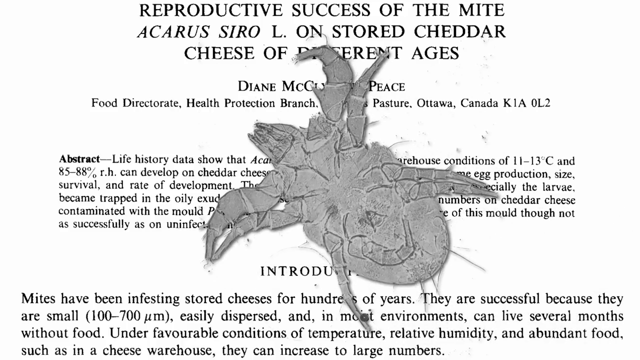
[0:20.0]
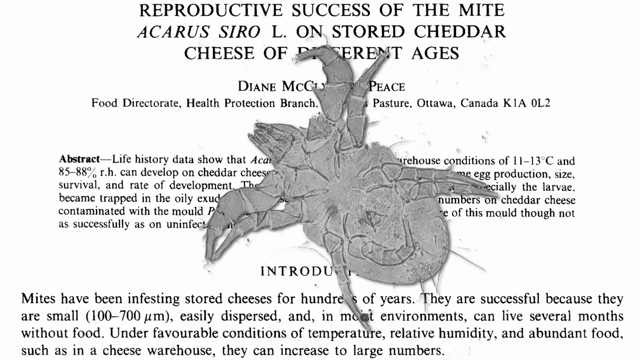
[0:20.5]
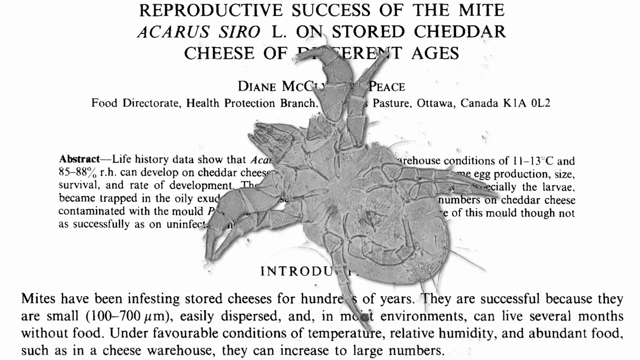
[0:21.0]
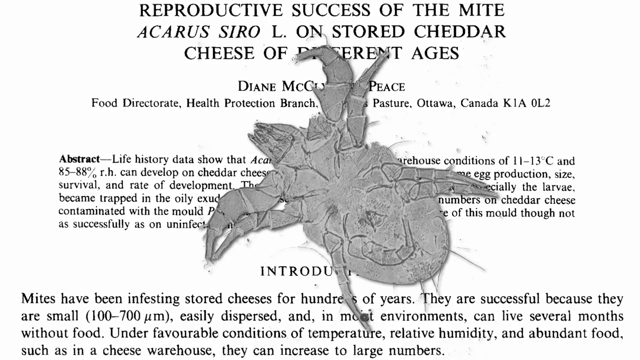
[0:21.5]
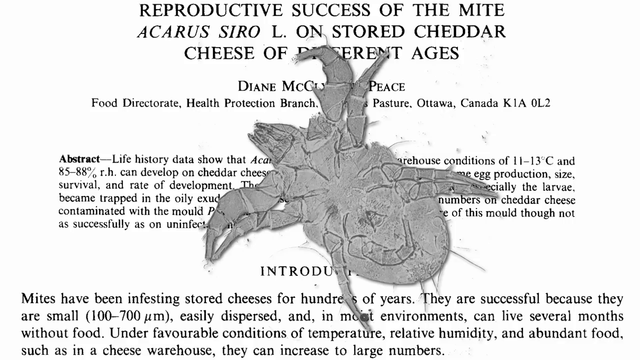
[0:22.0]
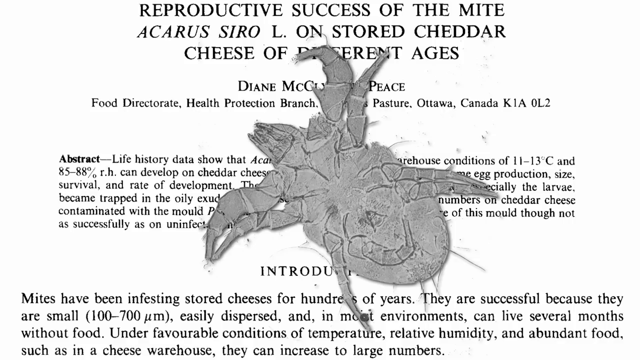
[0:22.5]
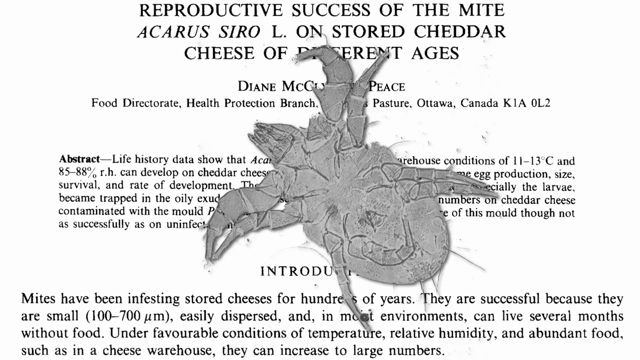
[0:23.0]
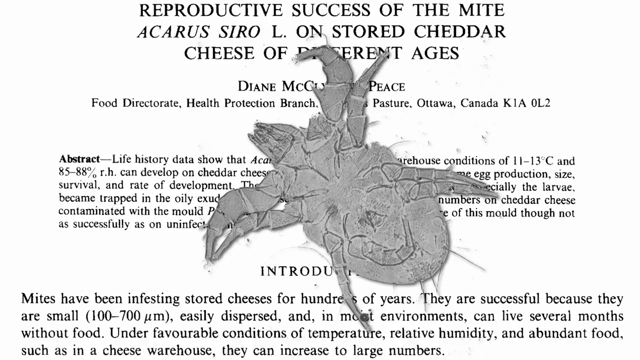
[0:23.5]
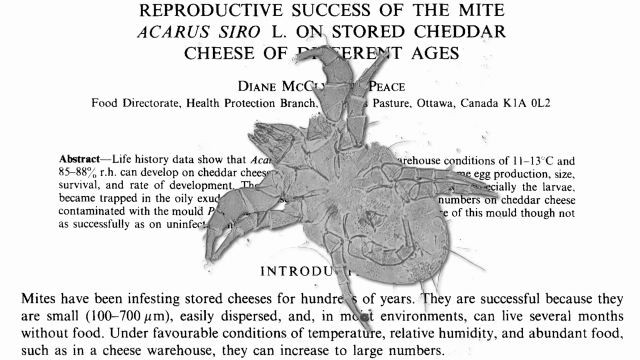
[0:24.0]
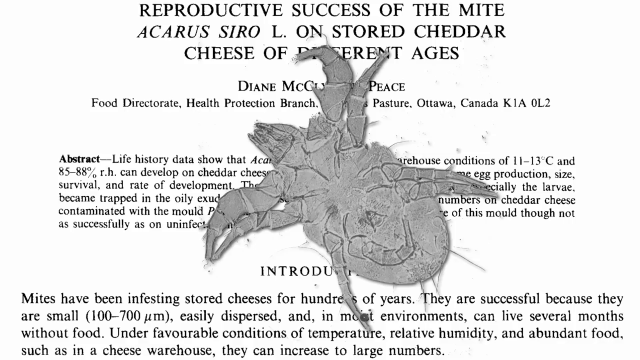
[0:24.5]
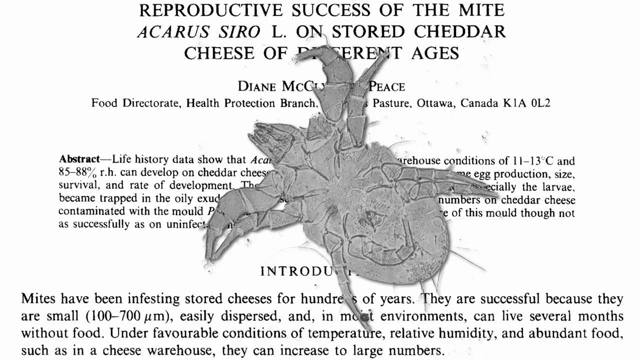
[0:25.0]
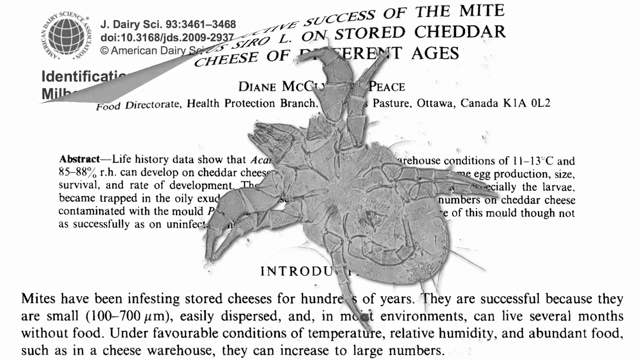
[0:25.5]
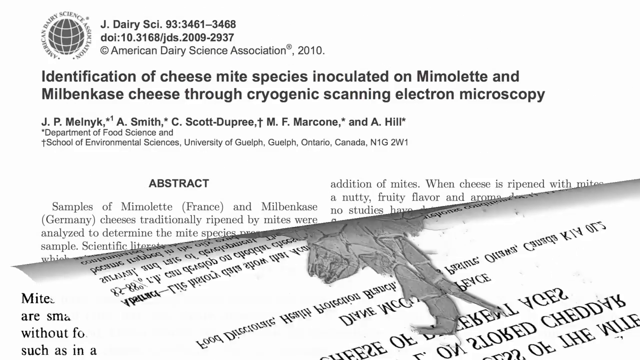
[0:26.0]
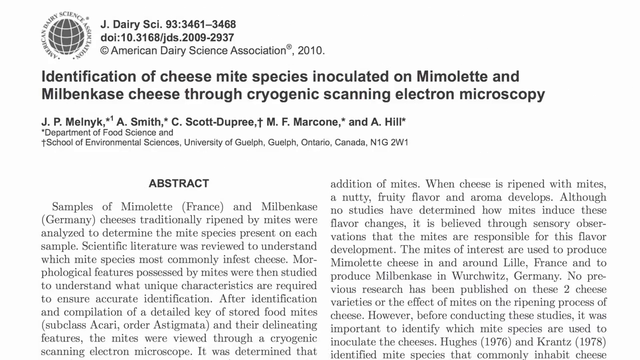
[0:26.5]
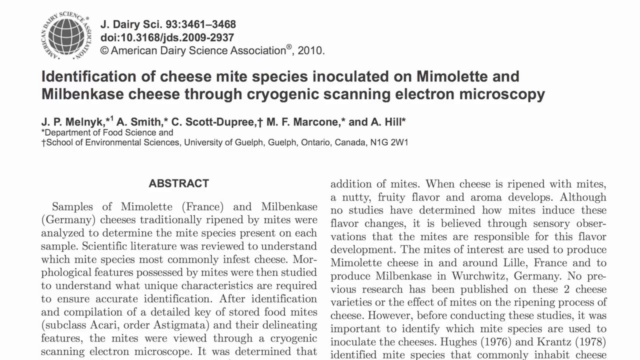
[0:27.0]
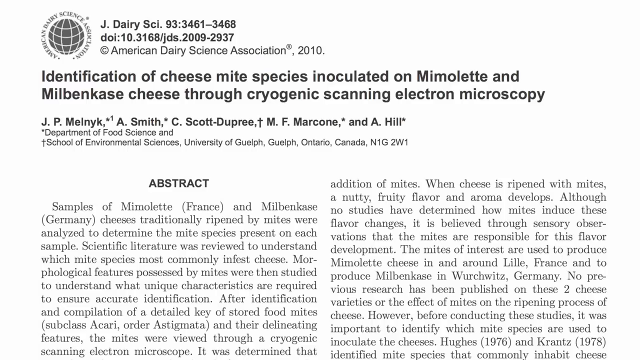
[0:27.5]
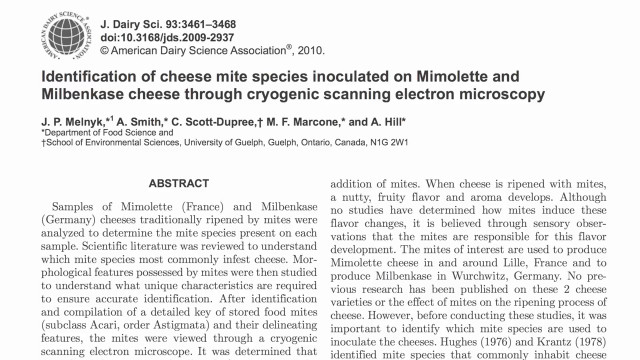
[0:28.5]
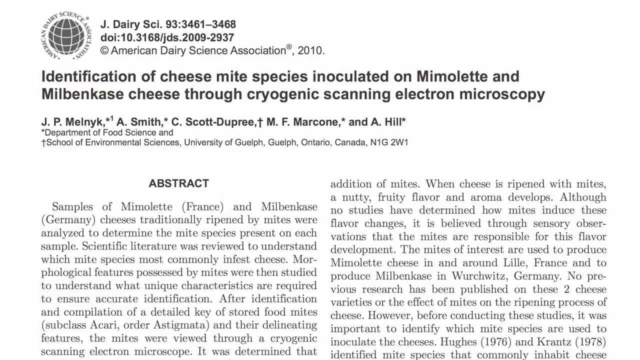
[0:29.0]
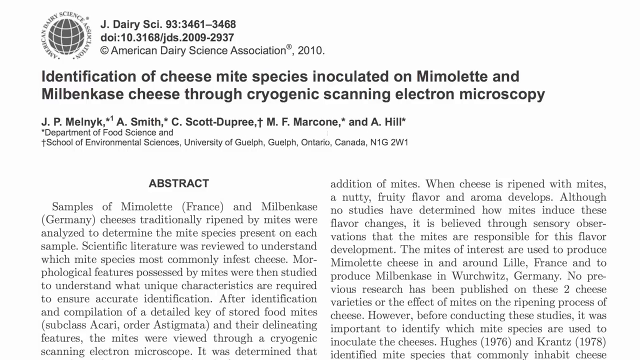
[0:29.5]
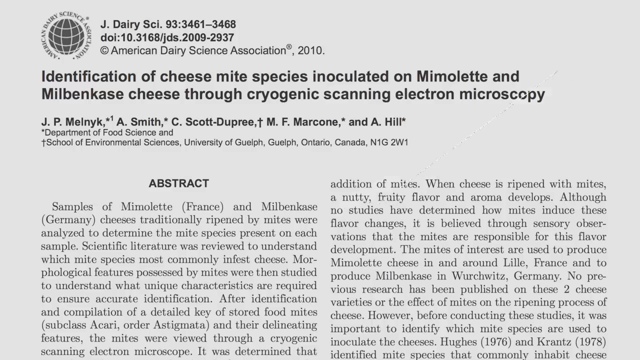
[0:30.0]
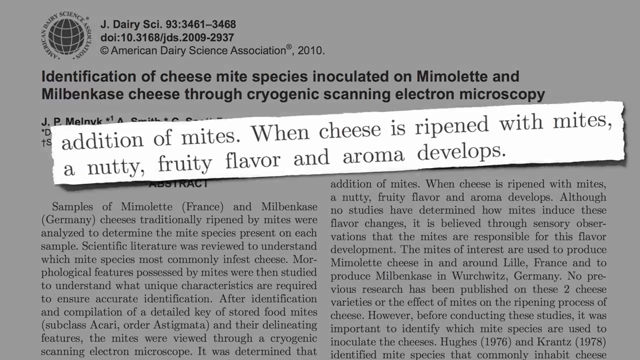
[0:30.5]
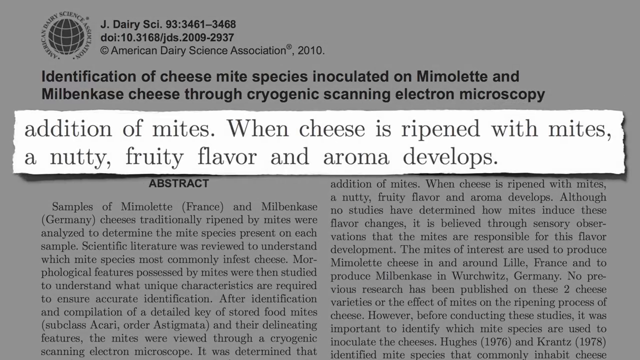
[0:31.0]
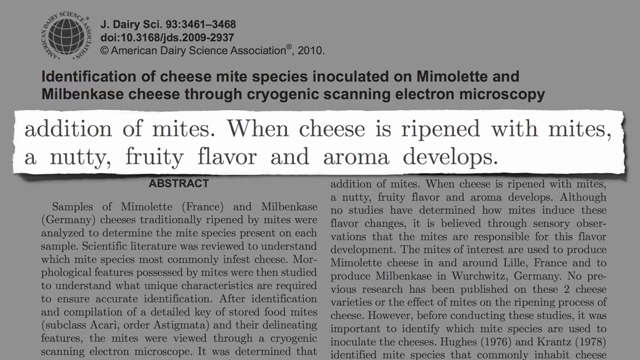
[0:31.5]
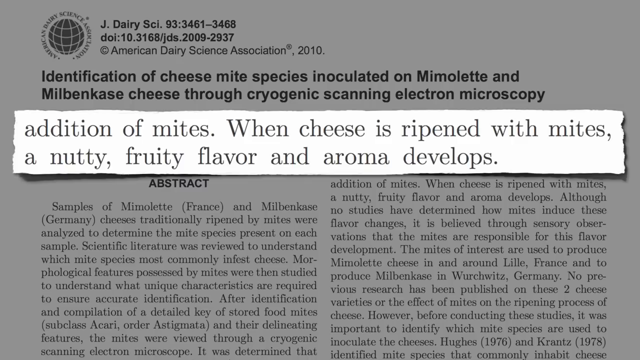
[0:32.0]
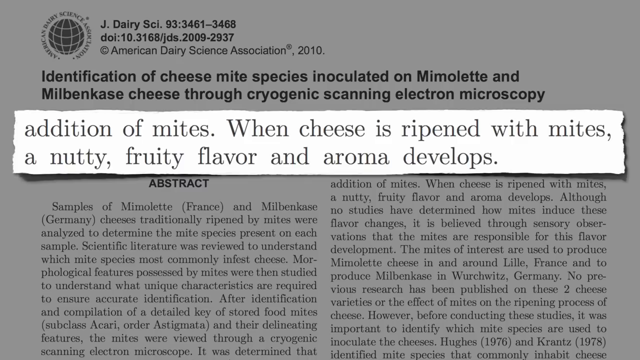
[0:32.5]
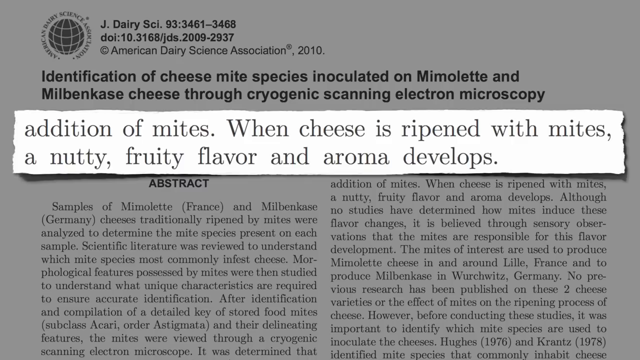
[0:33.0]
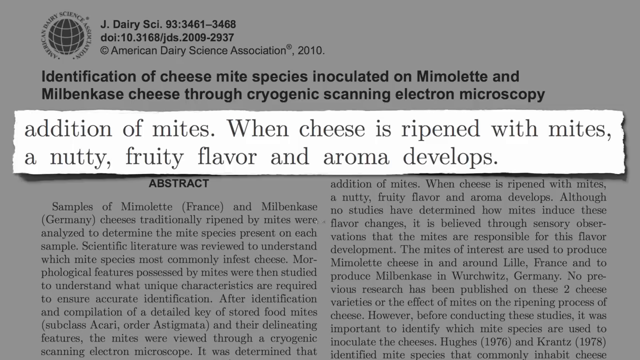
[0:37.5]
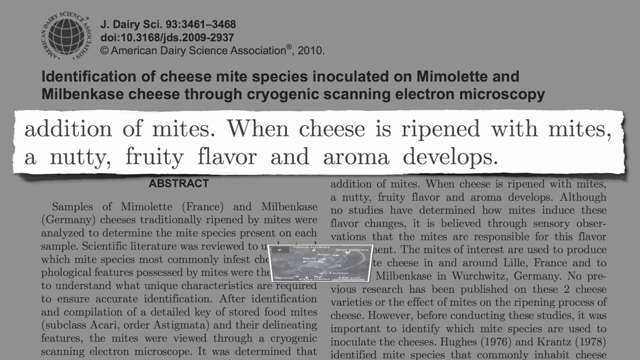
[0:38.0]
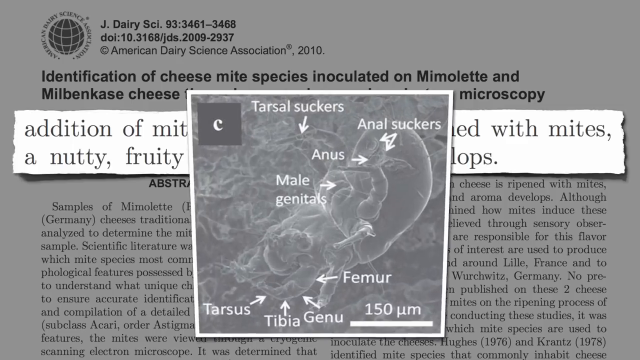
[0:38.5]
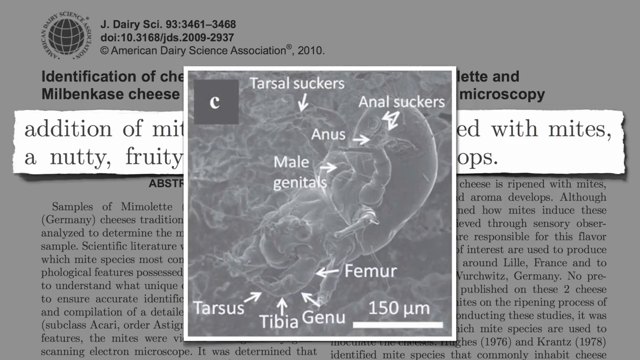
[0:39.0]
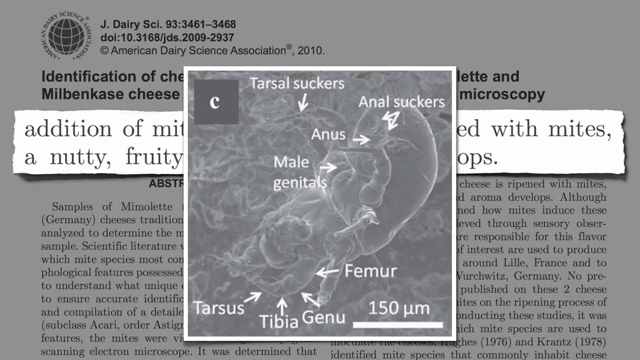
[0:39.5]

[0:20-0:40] Another article is shown with a large cheese mite on top of it; the mite looks somewhat like a tick. The article beneath the mite is titled "reproductive success of the mite Acharis syro-L on stored cheddar cheese of different ages." Its introduction states that mites have been infesting stored cheese for hundreds of years and are accessible because of their small size, that they like moist environments and can live several months without food, and that with abundant food, such as in a cheese warehouse, they can increase in large numbers. The next article is labeled "Identification of Cheese Mite Species Inoculated on Mimolette in Milbenkase Cheese Through Cyrogenic Scanning Electron Microscopy." Its abstract describes samples of different cheeses from France and Germany being analyzed to see which mite species were present. A highlighted piece of text shown on top states that when cheese is ripened with mites, a nutty, fruity flavor and aroma develops.